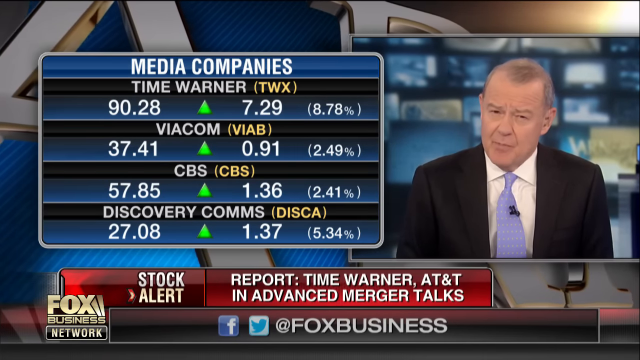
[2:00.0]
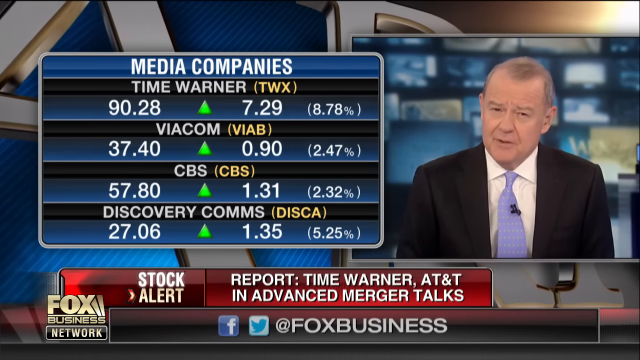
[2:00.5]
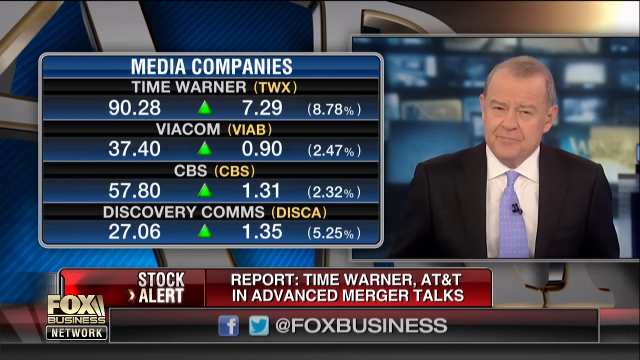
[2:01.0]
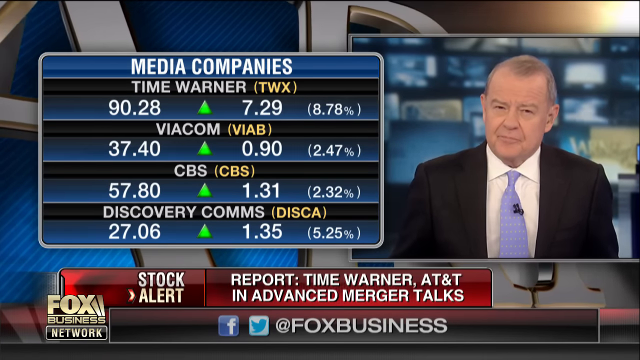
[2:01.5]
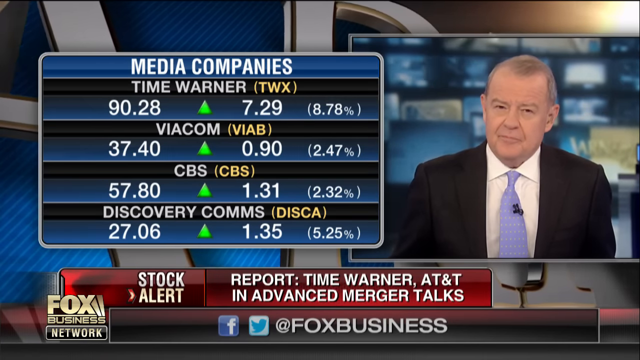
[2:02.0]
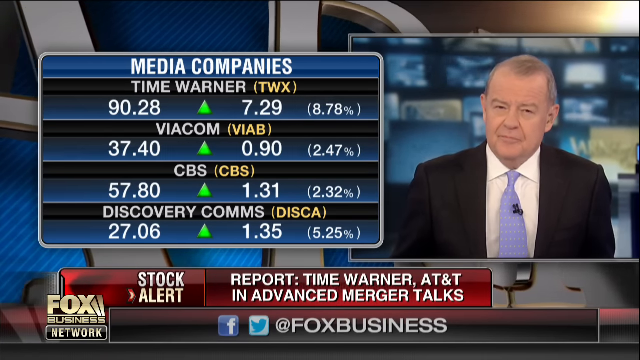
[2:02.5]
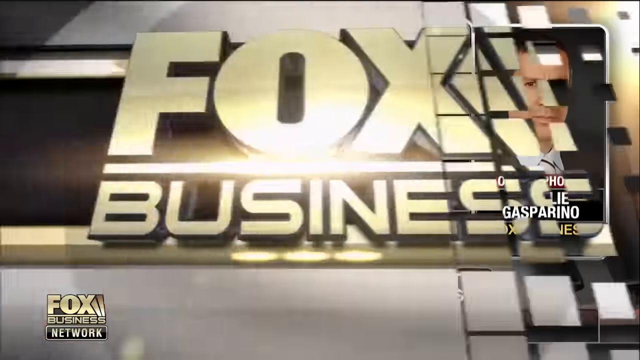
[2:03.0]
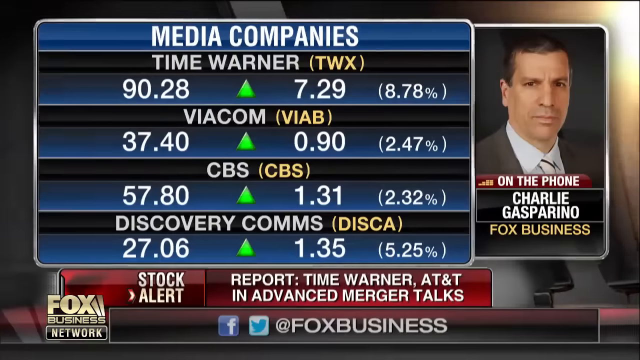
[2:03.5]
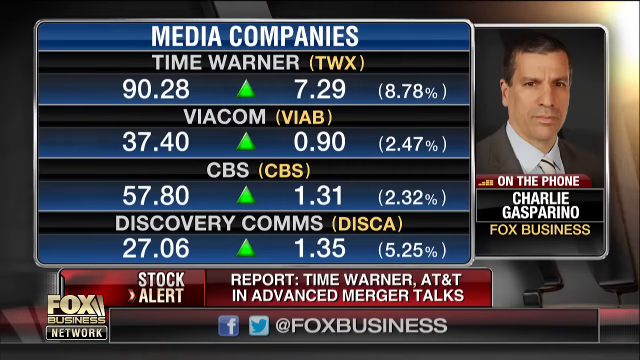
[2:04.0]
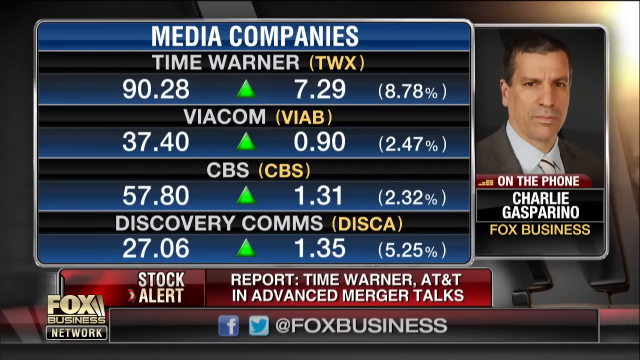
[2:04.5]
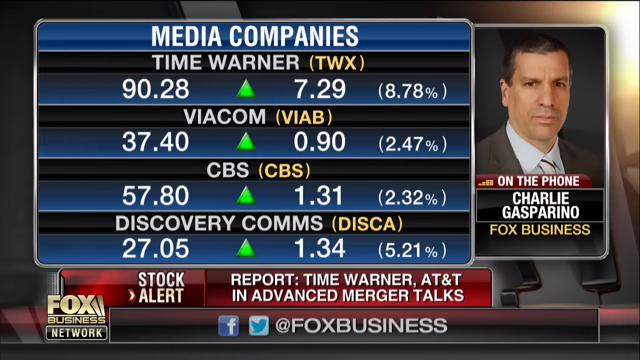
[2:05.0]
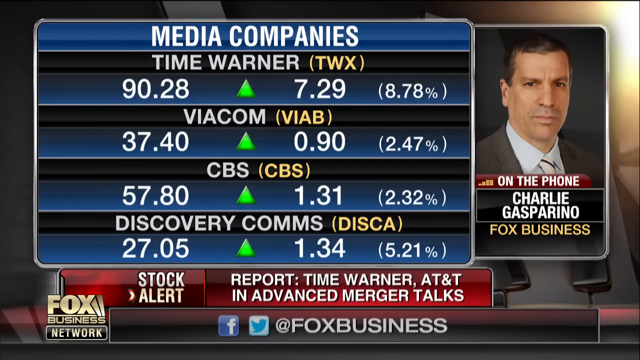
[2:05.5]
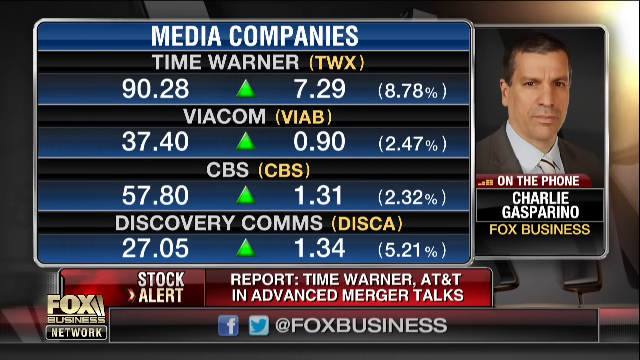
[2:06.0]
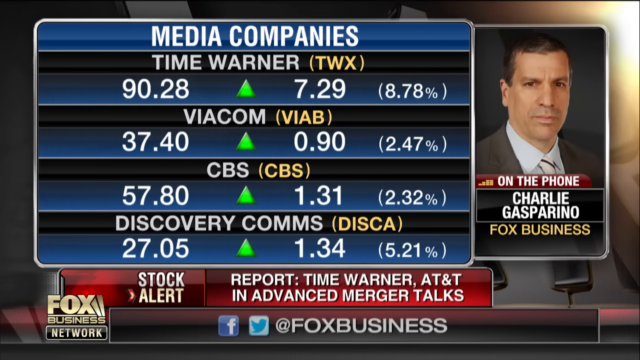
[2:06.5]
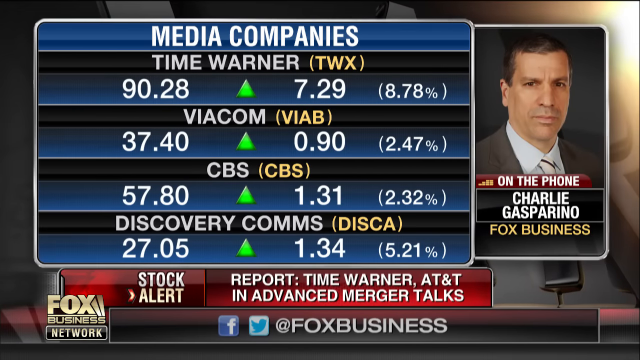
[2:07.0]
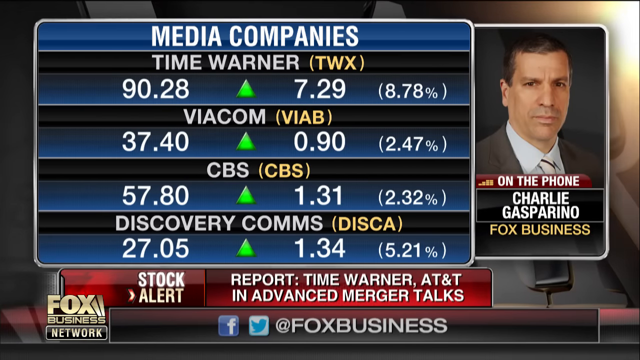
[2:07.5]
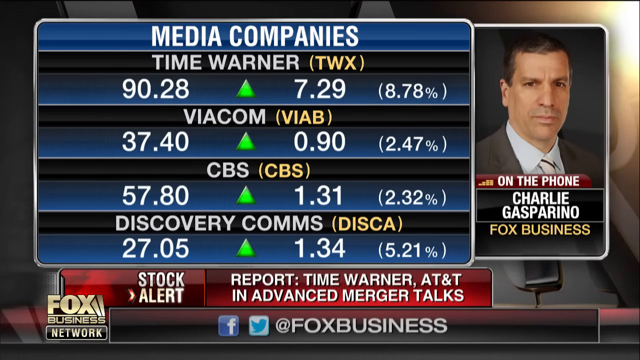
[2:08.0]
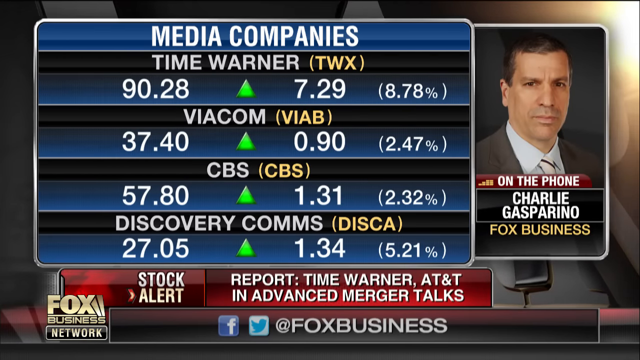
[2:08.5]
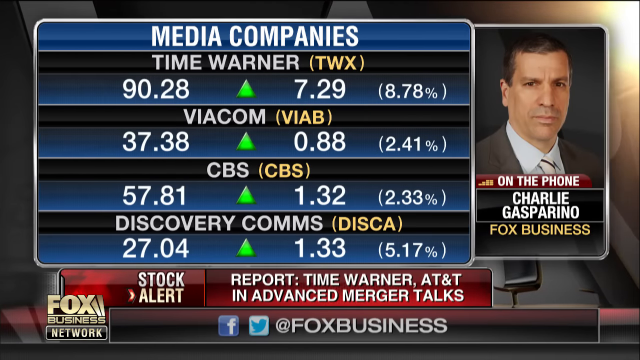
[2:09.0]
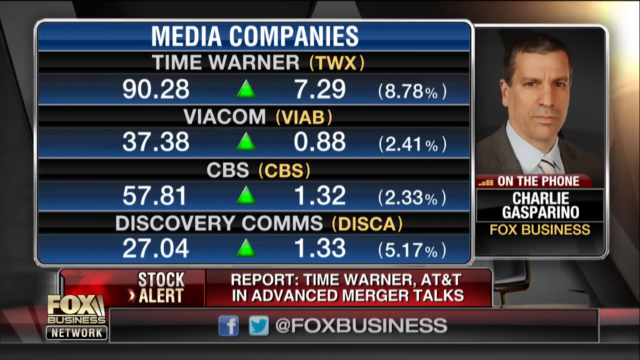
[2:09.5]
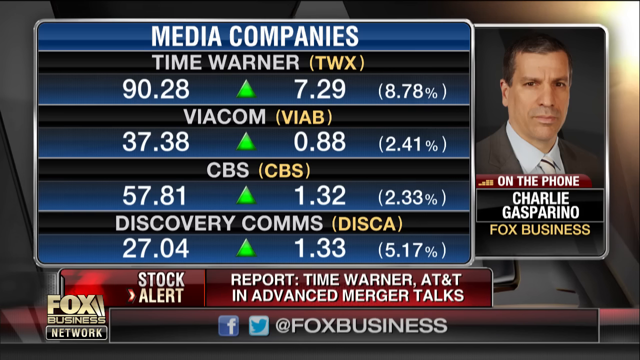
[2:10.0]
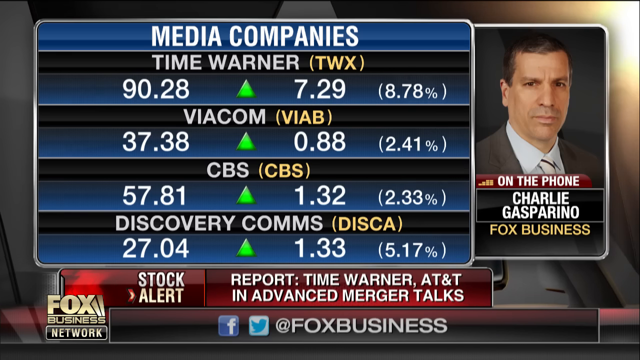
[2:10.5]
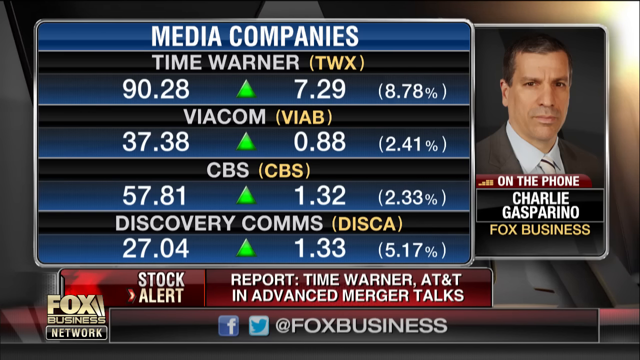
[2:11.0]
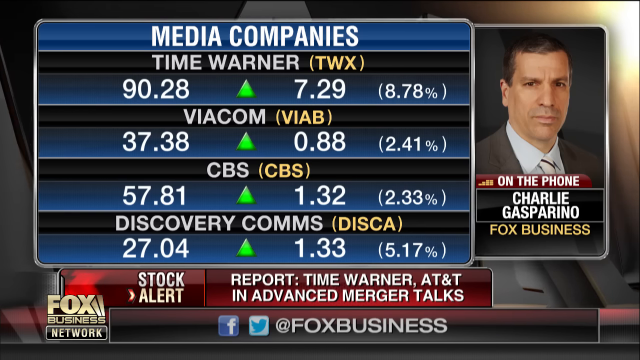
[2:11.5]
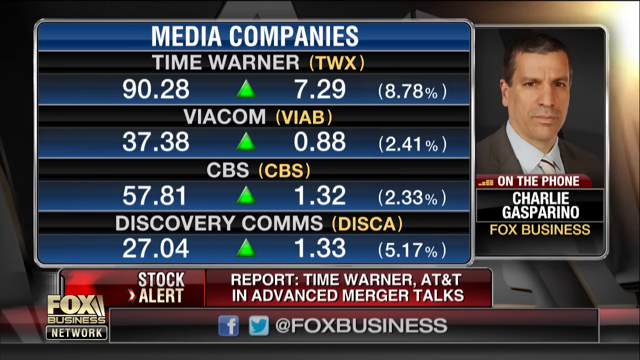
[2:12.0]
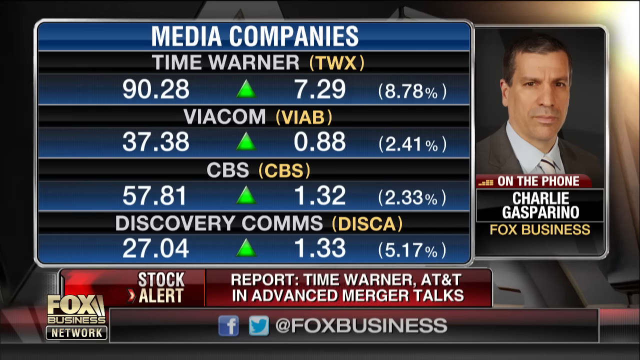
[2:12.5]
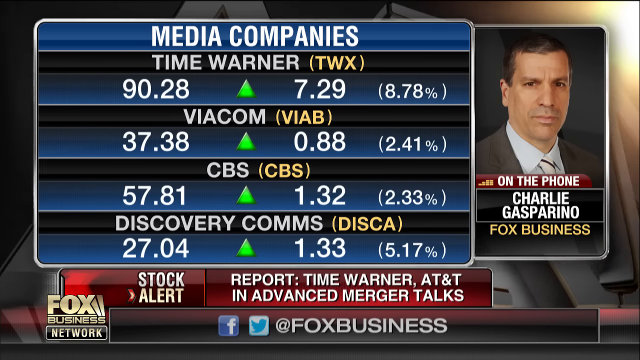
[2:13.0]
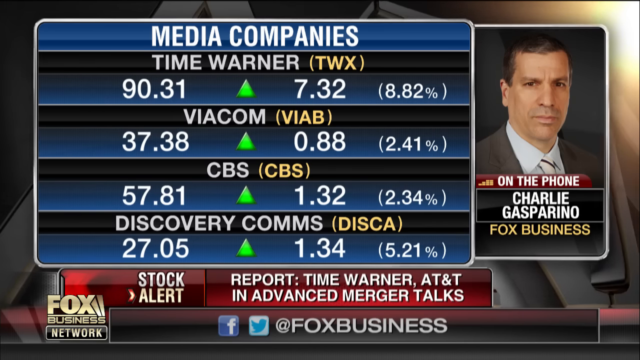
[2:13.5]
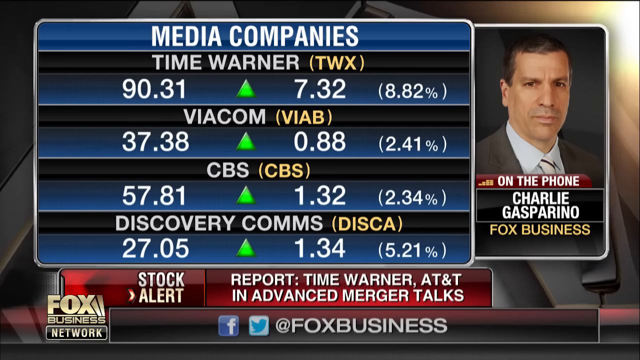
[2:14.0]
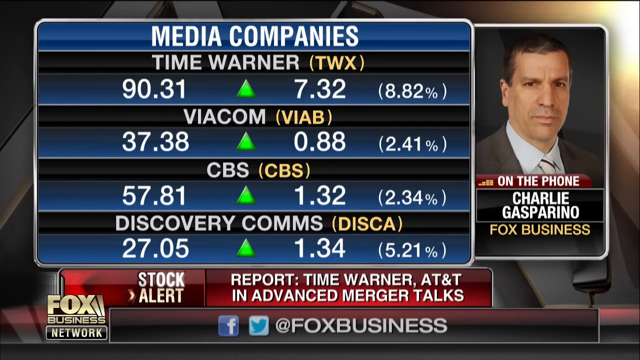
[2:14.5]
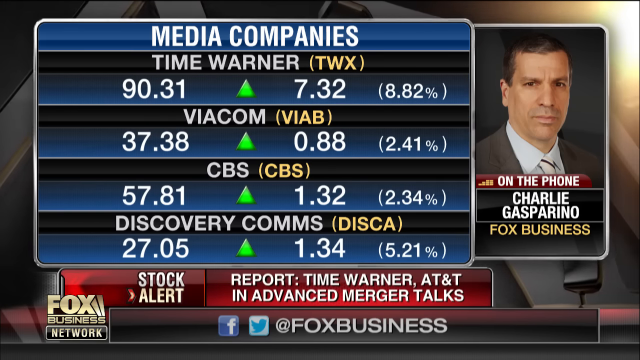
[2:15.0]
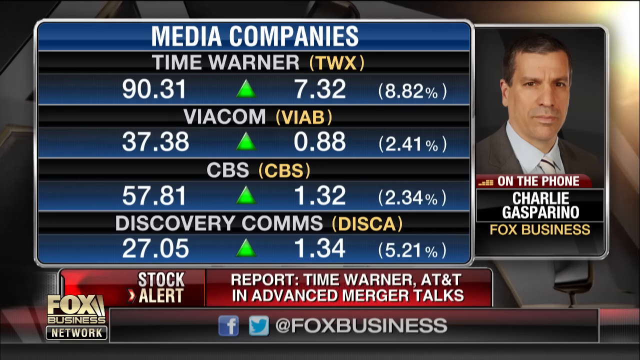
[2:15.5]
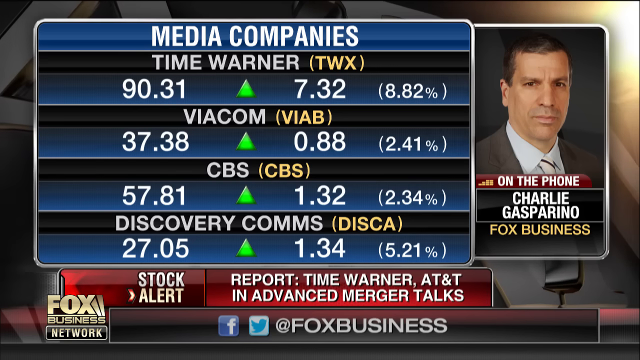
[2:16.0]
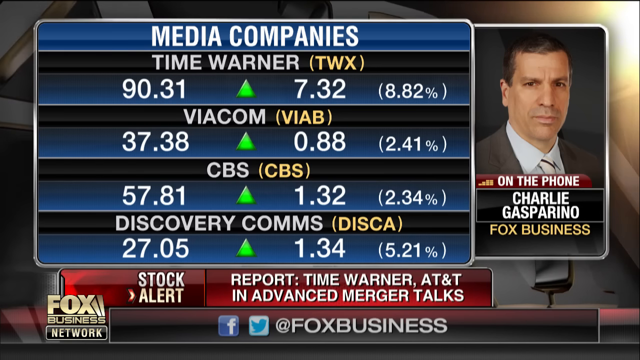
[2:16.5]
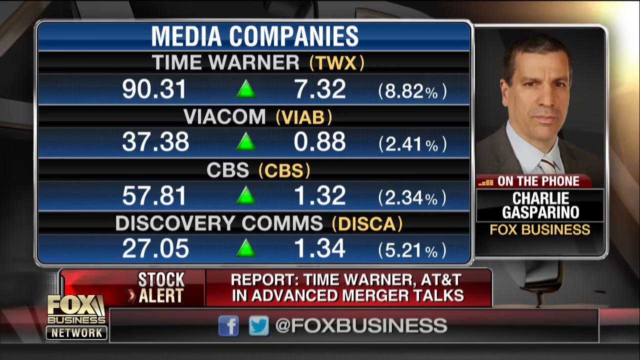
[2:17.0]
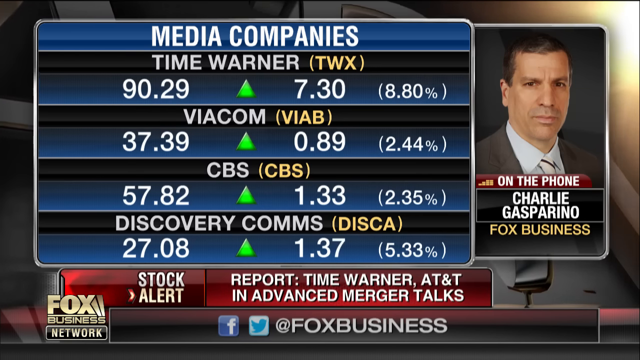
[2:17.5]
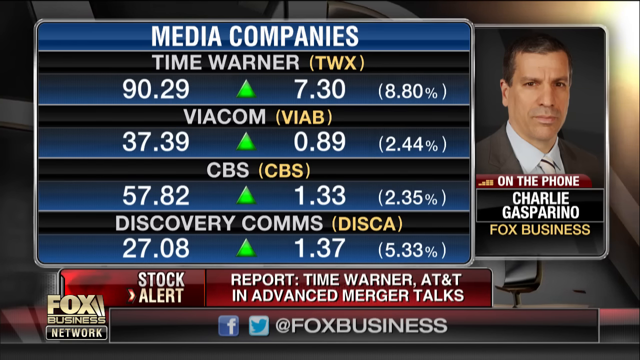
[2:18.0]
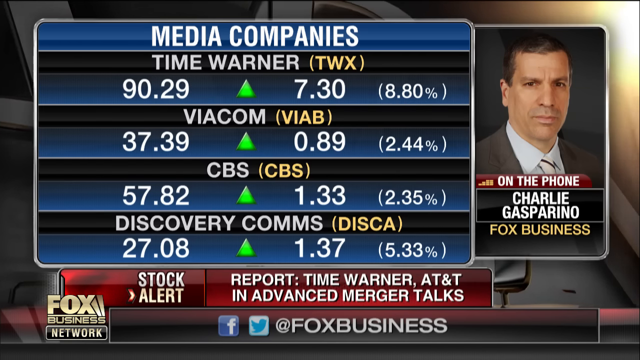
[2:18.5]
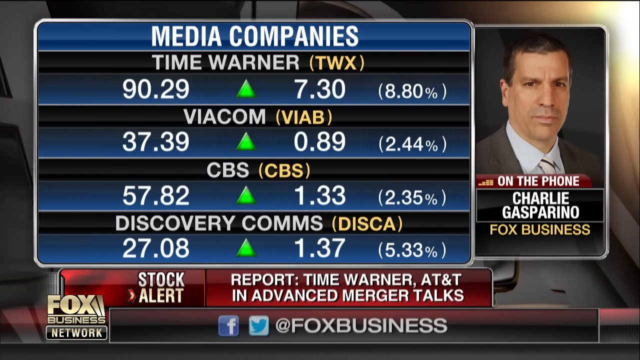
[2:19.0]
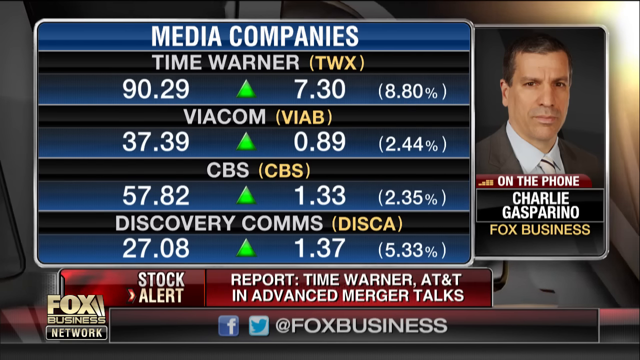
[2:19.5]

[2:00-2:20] The man continues to talk as the Viacom price changes to 37.40, up 9.90, 2.47%; CBS to 57.80, up 1.31, 2.32%; and Discovery Comms to 27.06, up 1.35, 5.25%. The Fox Business logo comes in from the right, and the larger Media Companies window returns on the left, with the "on the phone" window of Charlie Gasparino, a tanned man with short black hair in a dark grey suit, a white shirt and a white striped tie. The three-dimensional grey letters in the background continue to rotate behind all the windows. The words "stock alert" in the upper news ticker glisten, and the prices change to Time Warner 90.28, up 7.29, 8.78%; Viacom 37.38, up 0.88, 2.41%; CBS 57.81, up 1.32, 2.33%; Discovery Comms 27.04, up 1.33, 5.17%. Time Warner then changes to 90.31, up 7.32, 8.82%, and Discovery Comms to 27.05, up 1.34, 5.21%. "Stock alert" glistens, and the prices change to Time Warner 90.29, up 7.30, 8.80%; Viacom 37.39, up 0.89, 2.44%; CBS 57.82, up 1.33, 2.35%; Discovery Comms 27.08, up 1.37, 5.33%.